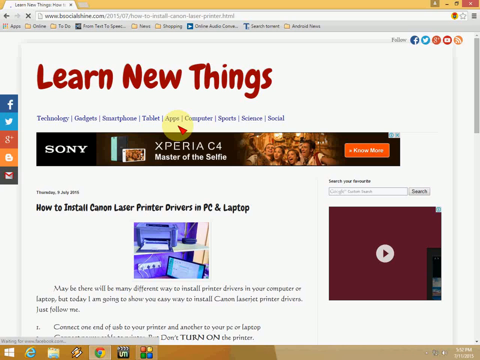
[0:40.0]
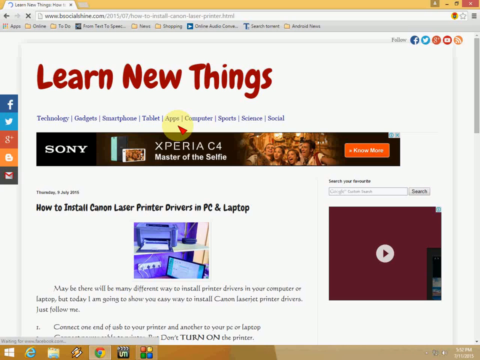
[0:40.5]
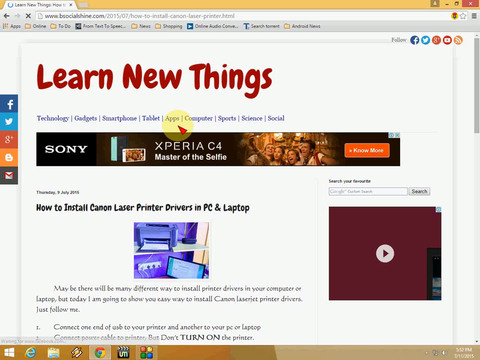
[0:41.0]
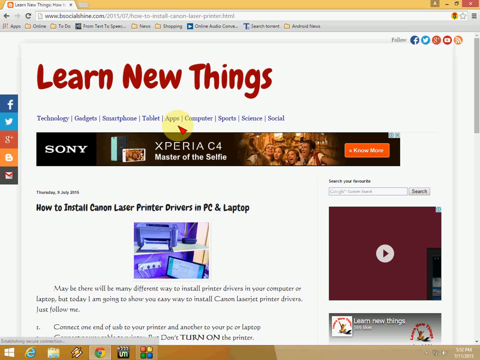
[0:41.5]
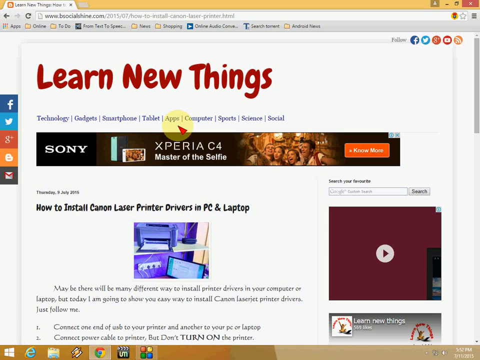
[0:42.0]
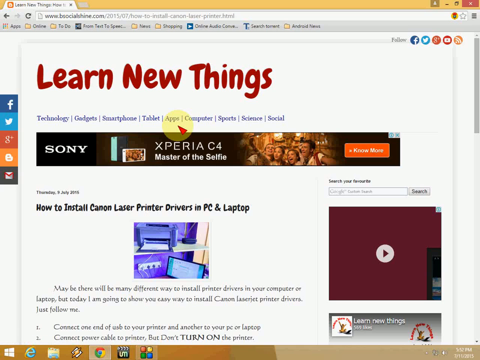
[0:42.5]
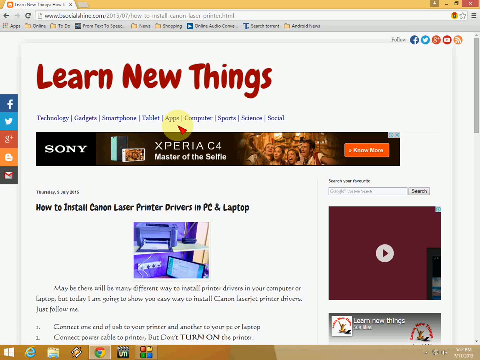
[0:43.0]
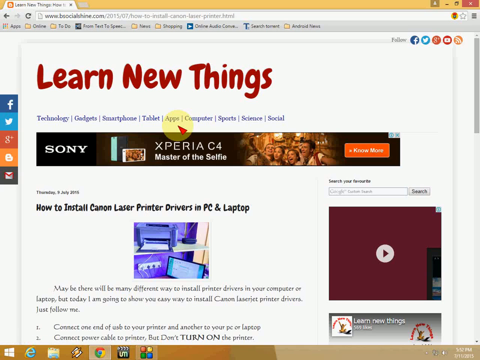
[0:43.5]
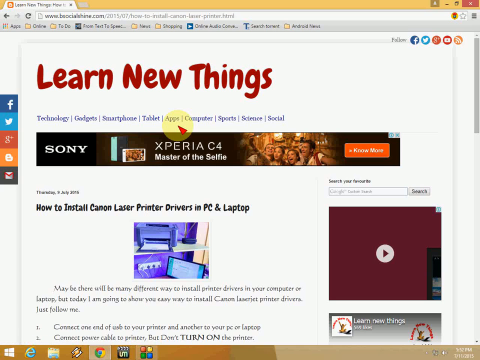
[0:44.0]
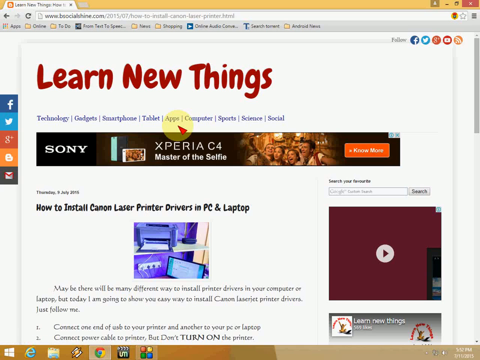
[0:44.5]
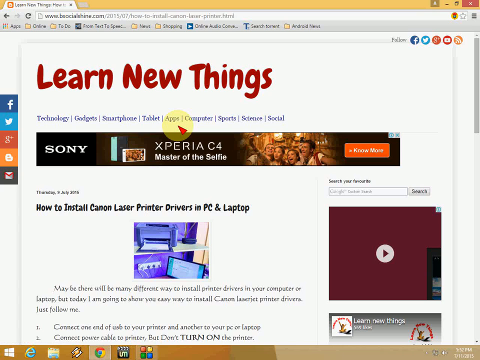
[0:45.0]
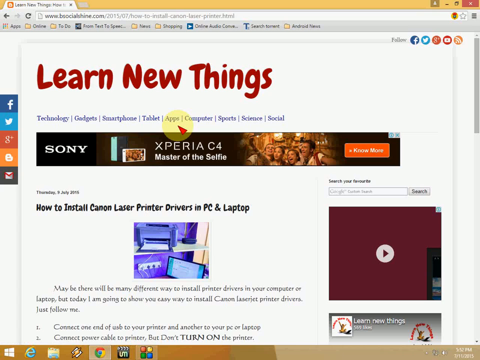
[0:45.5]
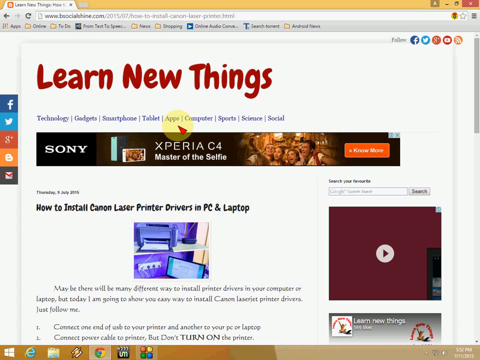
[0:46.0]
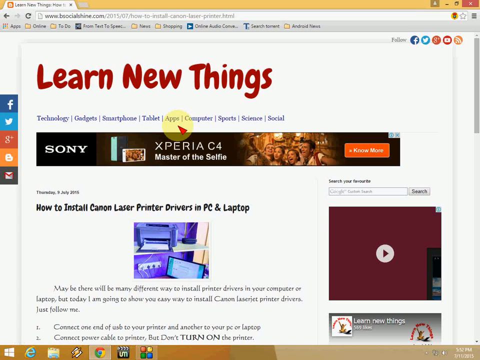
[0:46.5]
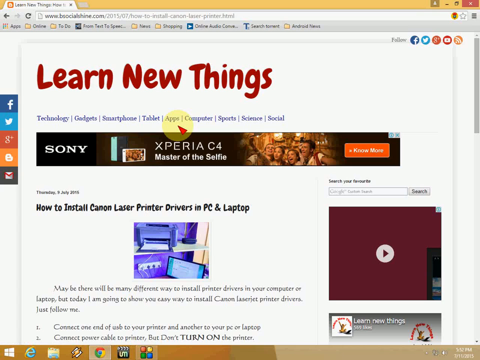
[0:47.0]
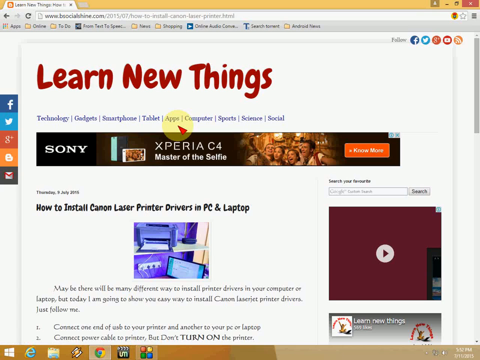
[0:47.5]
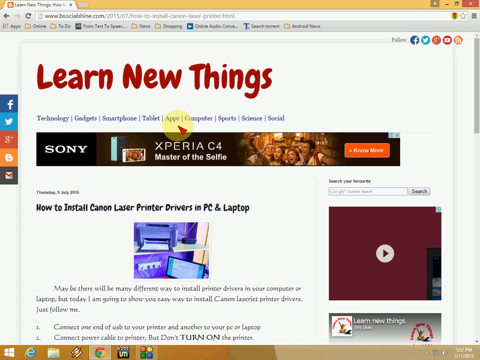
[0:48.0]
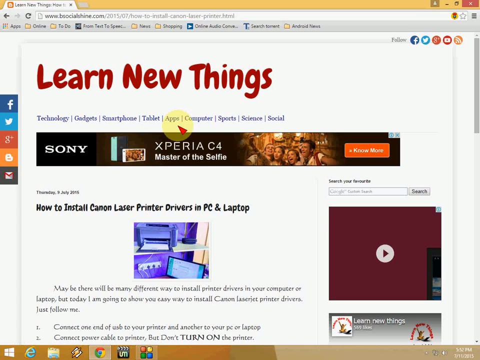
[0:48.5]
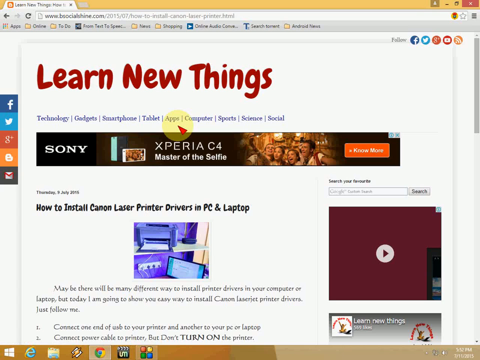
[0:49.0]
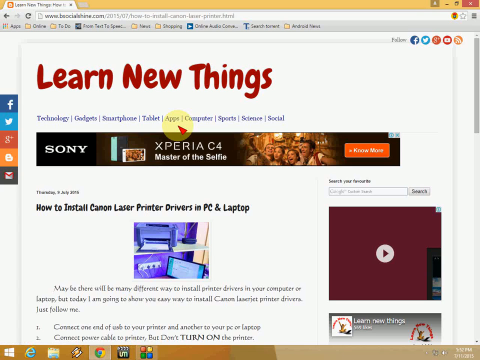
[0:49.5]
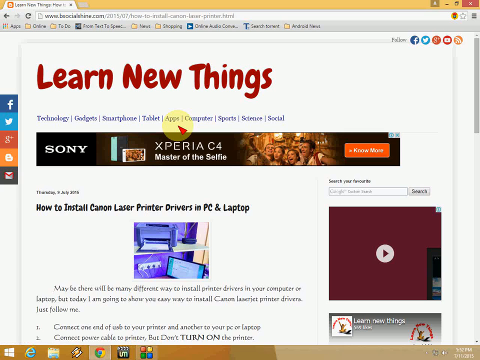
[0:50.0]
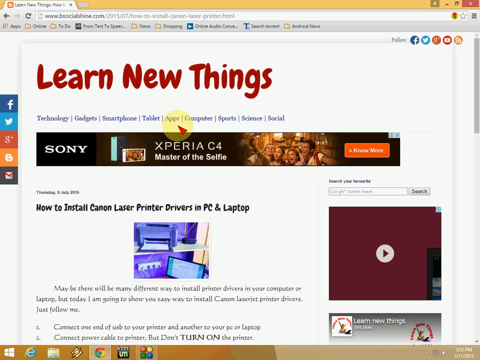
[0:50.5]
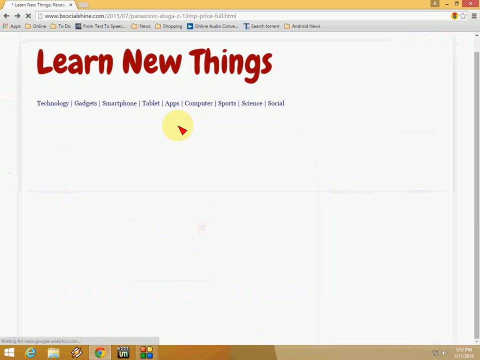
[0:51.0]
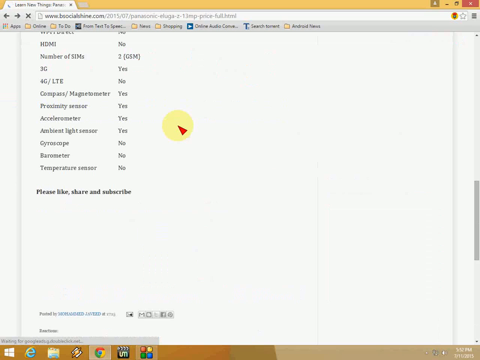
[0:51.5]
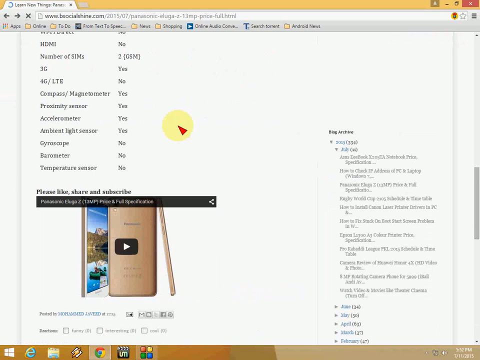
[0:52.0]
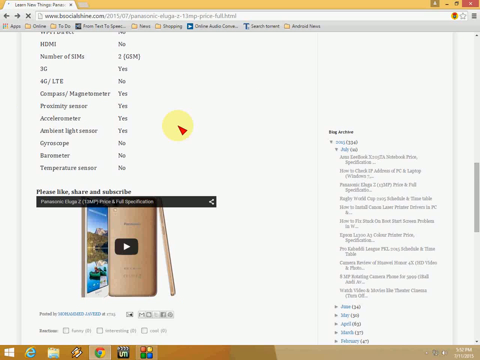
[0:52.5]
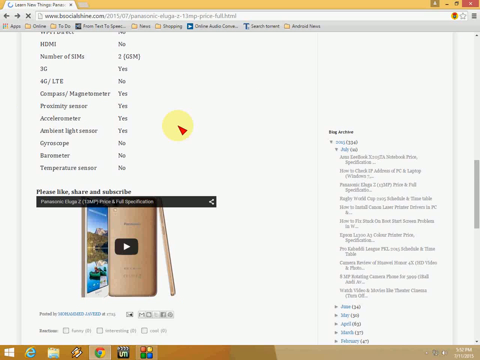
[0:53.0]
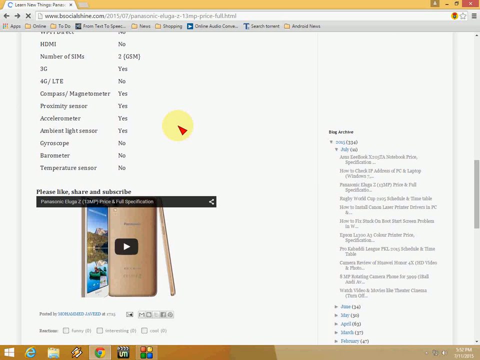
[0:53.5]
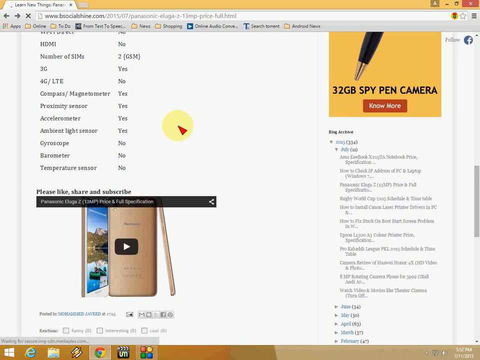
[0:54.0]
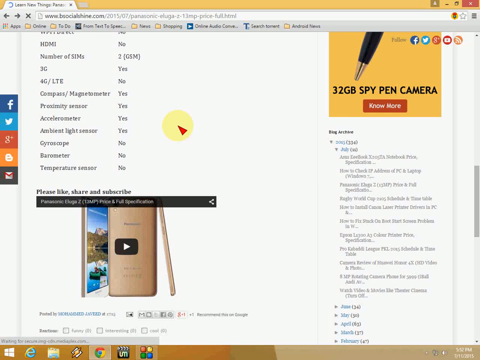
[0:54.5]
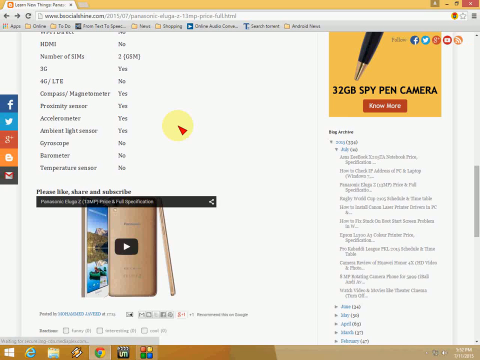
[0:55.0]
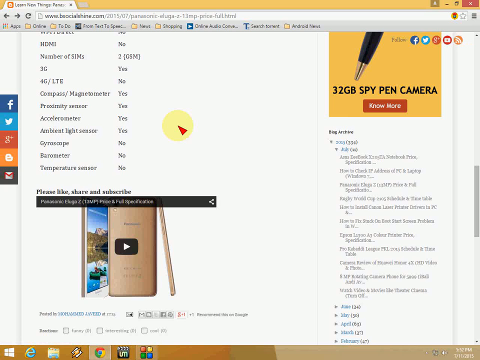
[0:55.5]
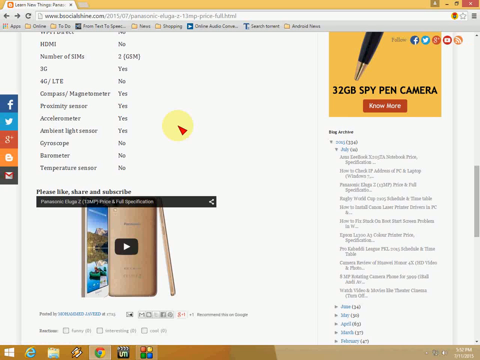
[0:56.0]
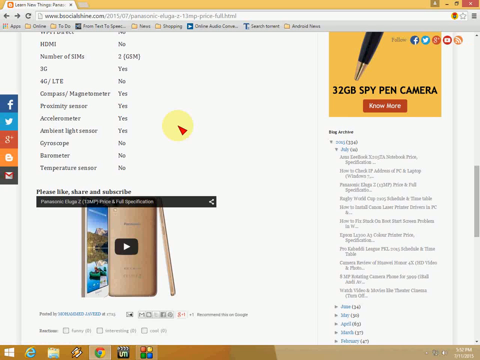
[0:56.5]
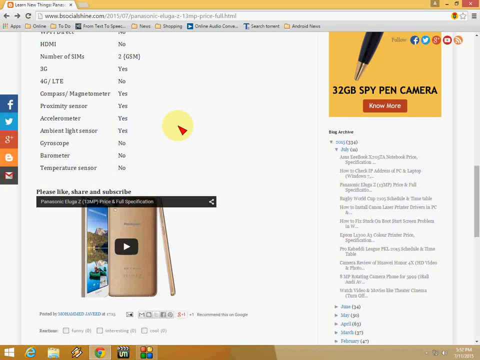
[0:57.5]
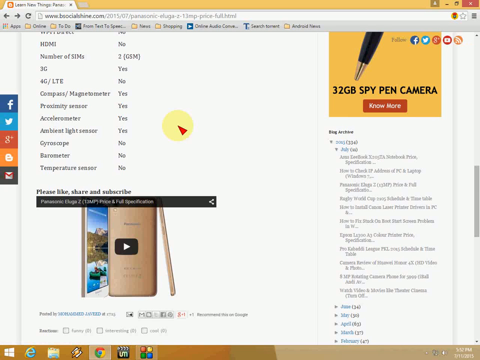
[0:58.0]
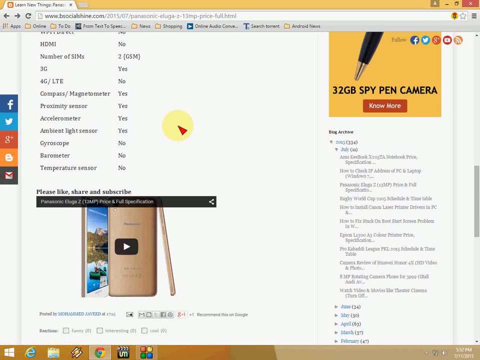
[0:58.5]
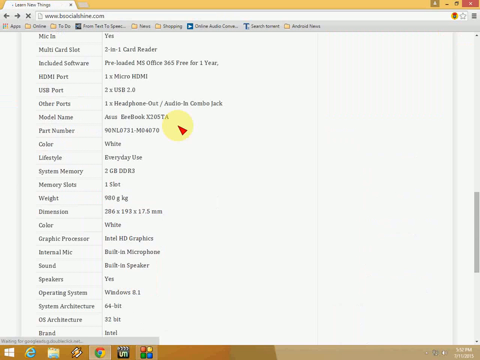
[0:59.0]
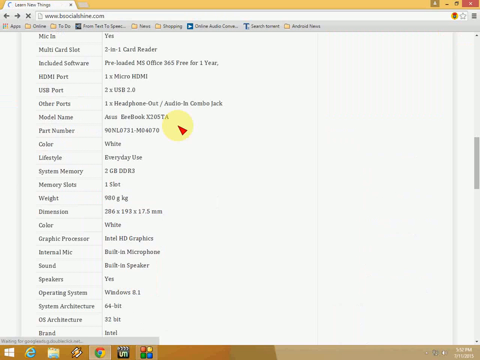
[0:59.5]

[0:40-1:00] The cursor travels toward the blue menu bar under the red "learn new things" title. It hovers just under "apps" in the menu bar, and then the page scrolls down, revealing a video about a phone and, on the right-hand side of the screen, an ad with a yellow background showing a portion of a pen, labeled "32 gigabyte spy pen camera", with a red button underneath. The screen stays still for a moment before scrolling again to reveal specifications of what is presented as a phone on the website, though it may actually be a laptop, since the listed ports include micro HDMI along with preloaded Microsoft Office. The background is mainly white, and at the bottom of the screen the Windows menu bar is visible with the Google Chrome icon and some other app icons.